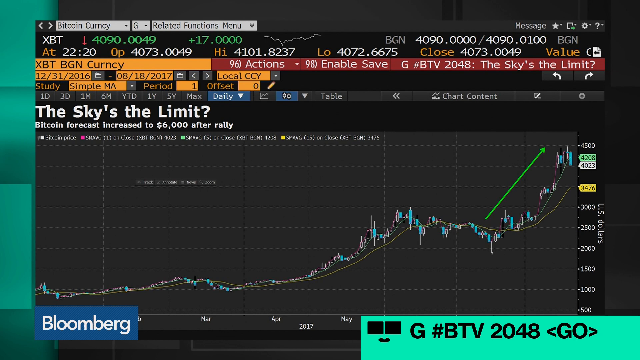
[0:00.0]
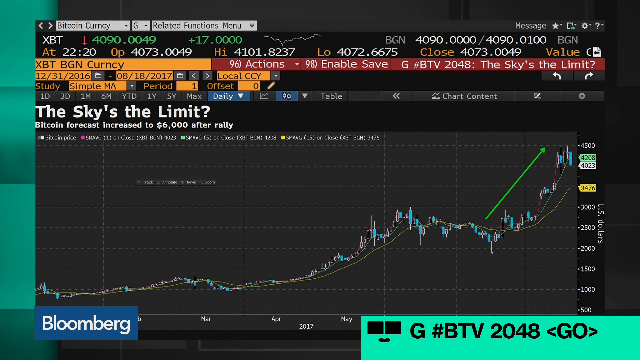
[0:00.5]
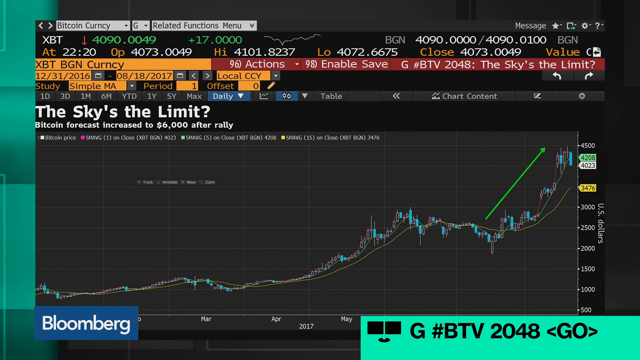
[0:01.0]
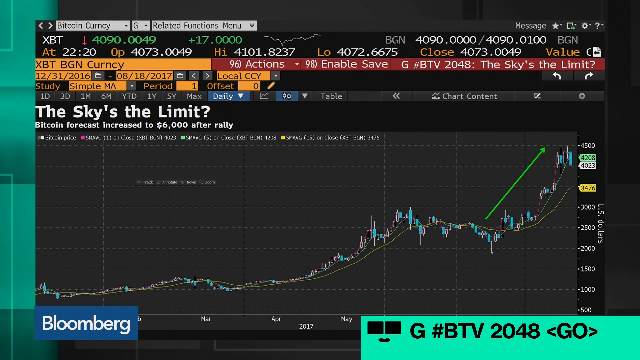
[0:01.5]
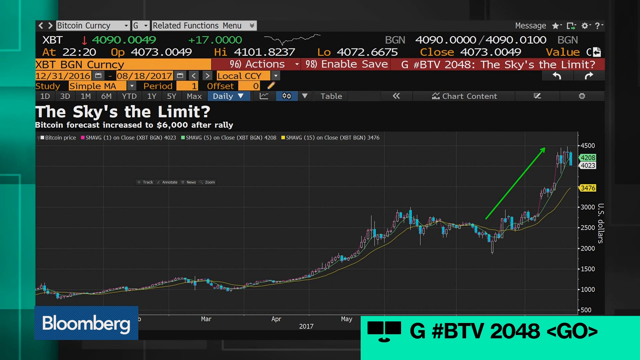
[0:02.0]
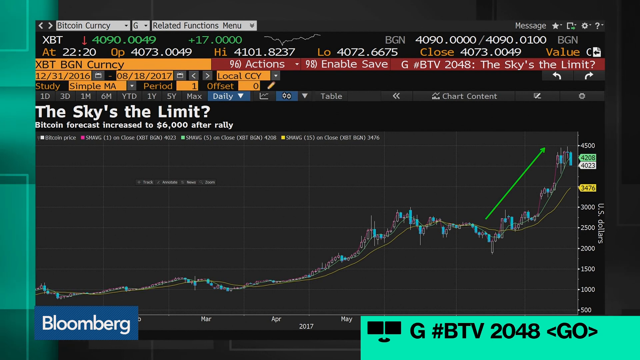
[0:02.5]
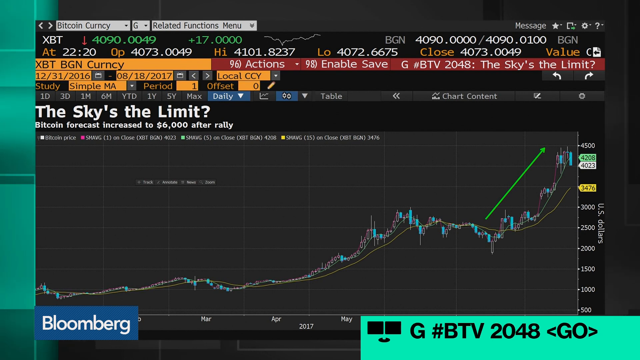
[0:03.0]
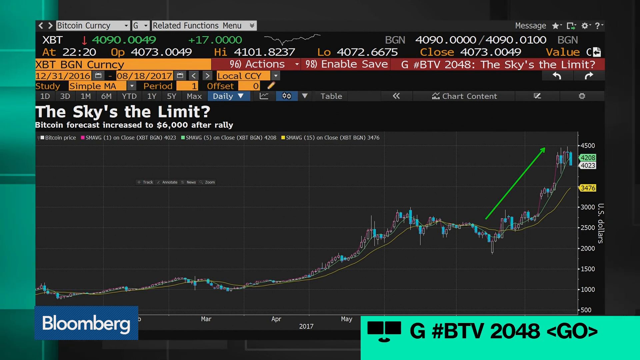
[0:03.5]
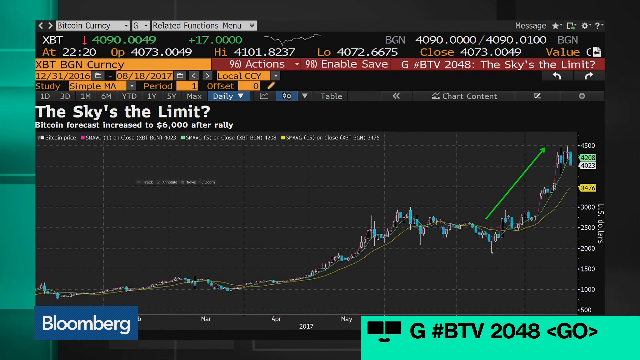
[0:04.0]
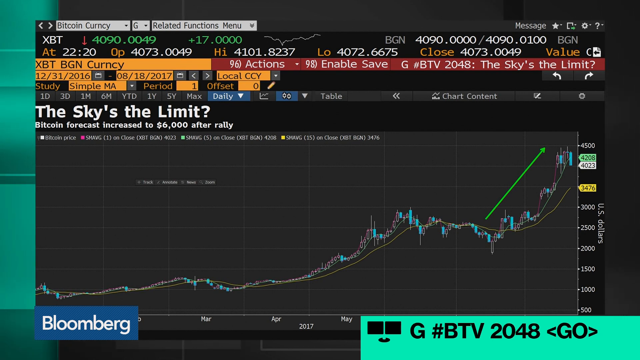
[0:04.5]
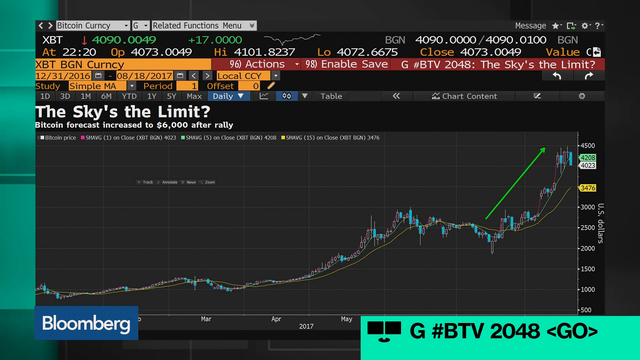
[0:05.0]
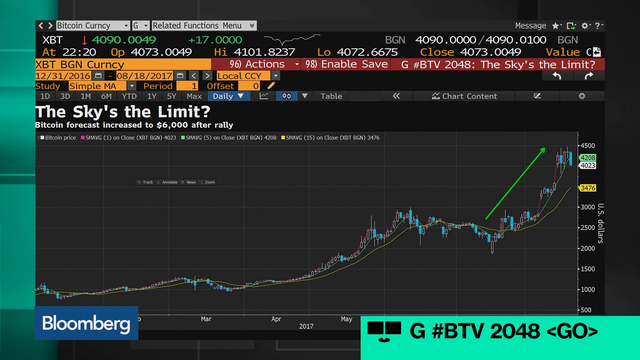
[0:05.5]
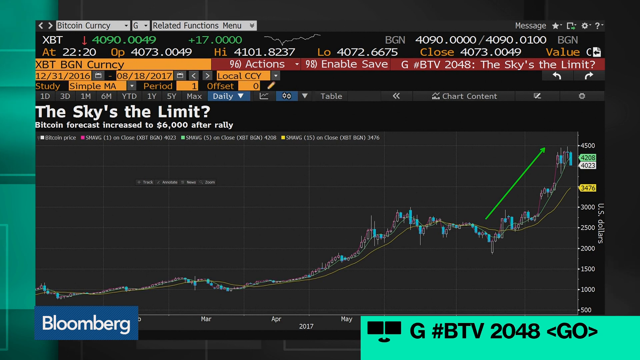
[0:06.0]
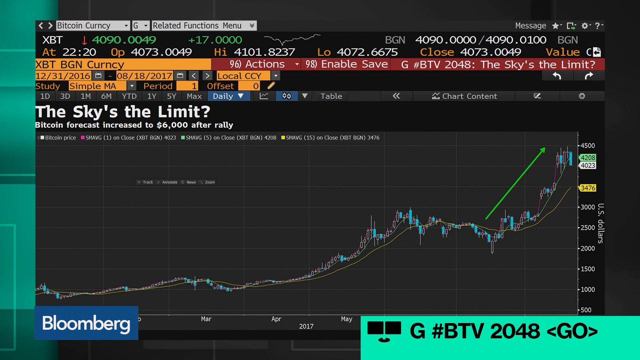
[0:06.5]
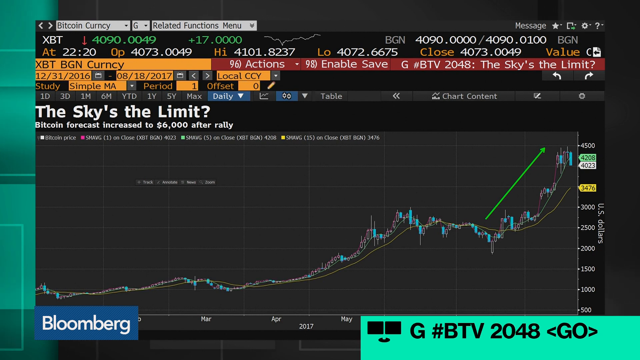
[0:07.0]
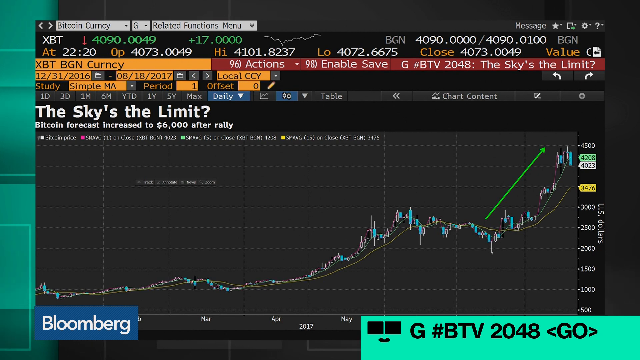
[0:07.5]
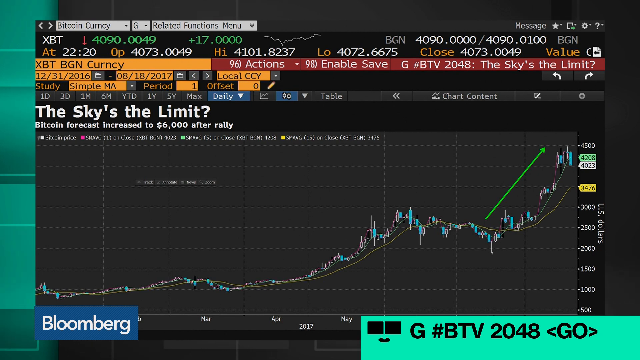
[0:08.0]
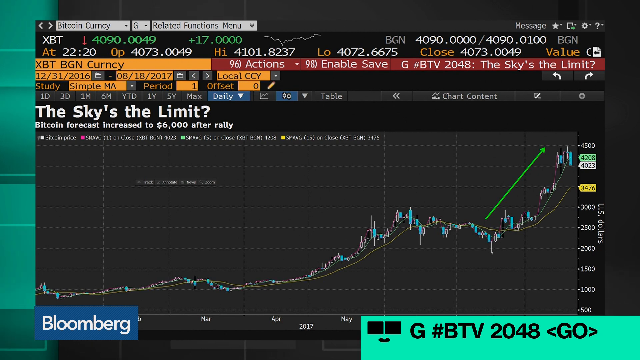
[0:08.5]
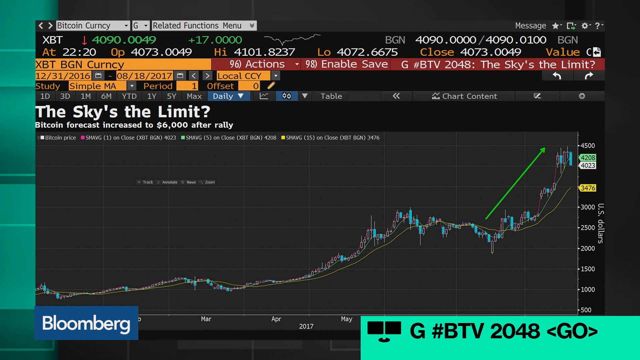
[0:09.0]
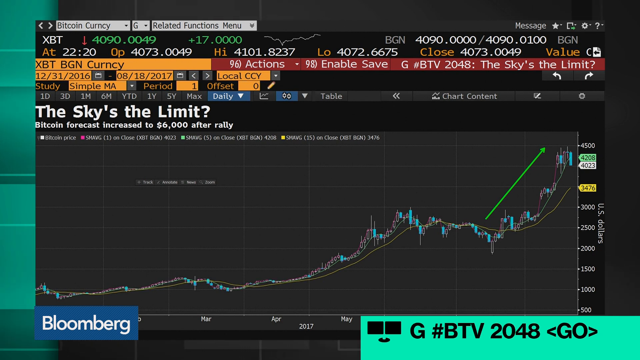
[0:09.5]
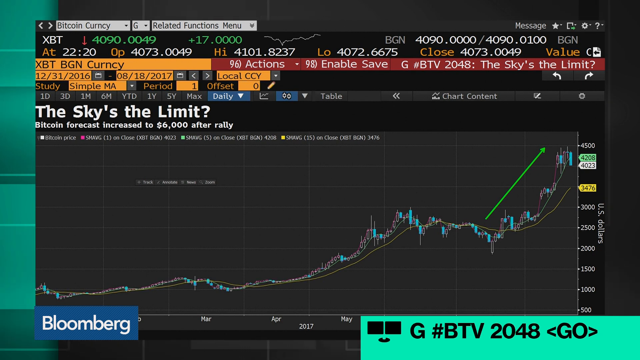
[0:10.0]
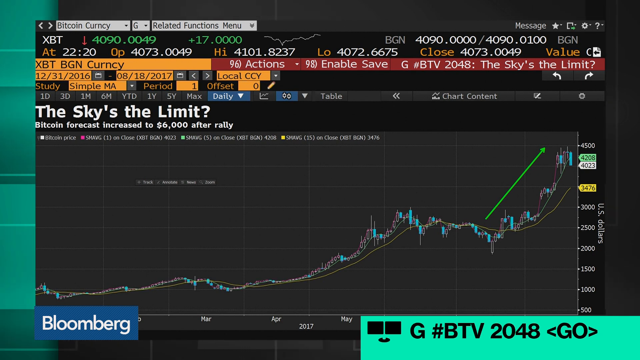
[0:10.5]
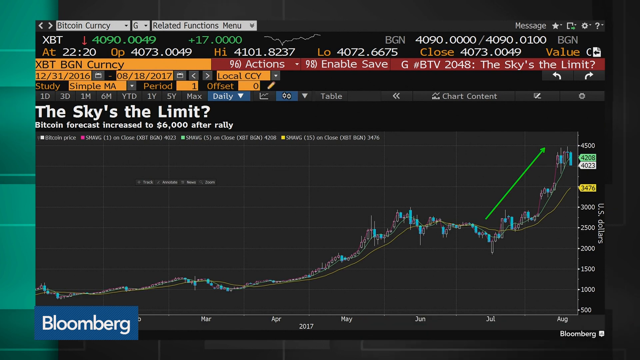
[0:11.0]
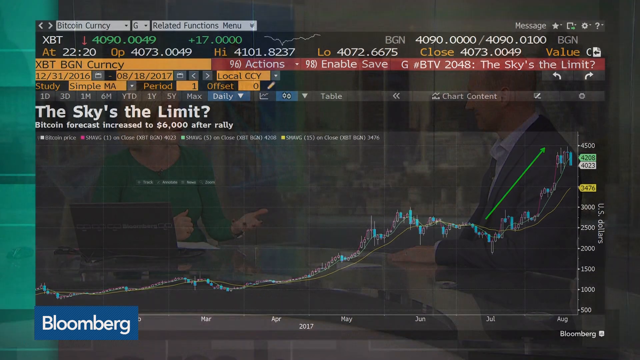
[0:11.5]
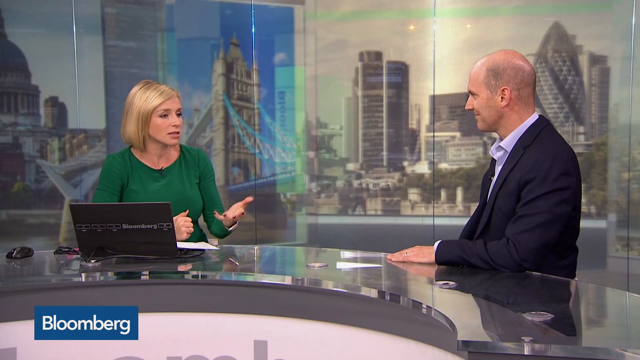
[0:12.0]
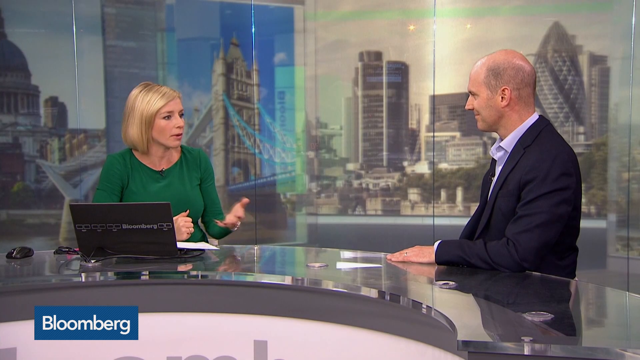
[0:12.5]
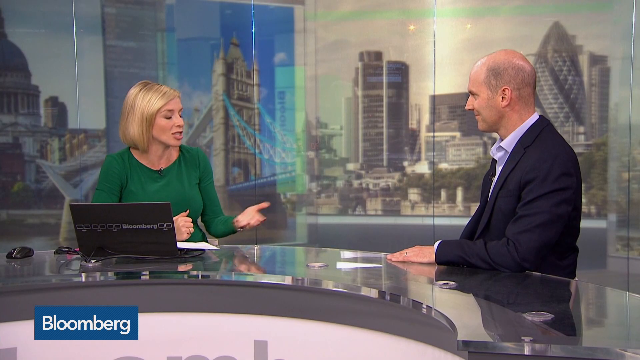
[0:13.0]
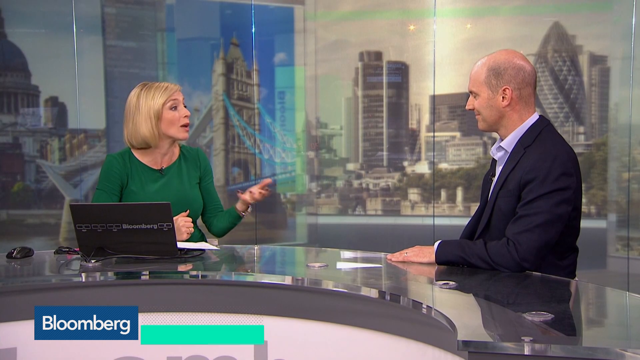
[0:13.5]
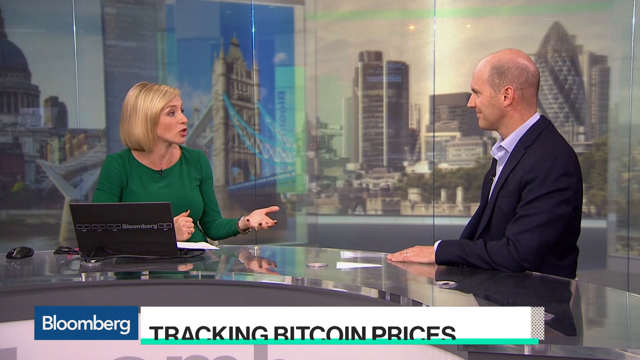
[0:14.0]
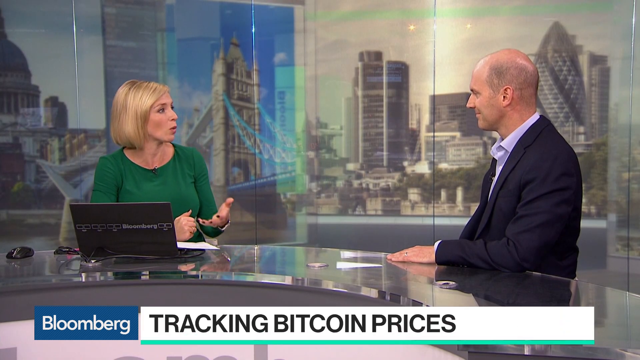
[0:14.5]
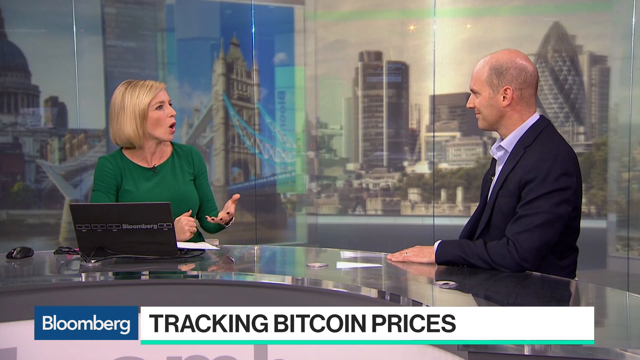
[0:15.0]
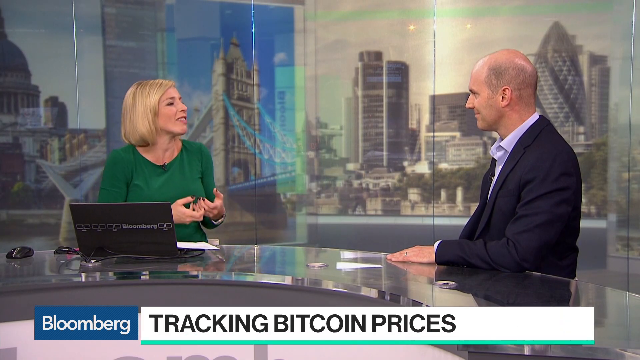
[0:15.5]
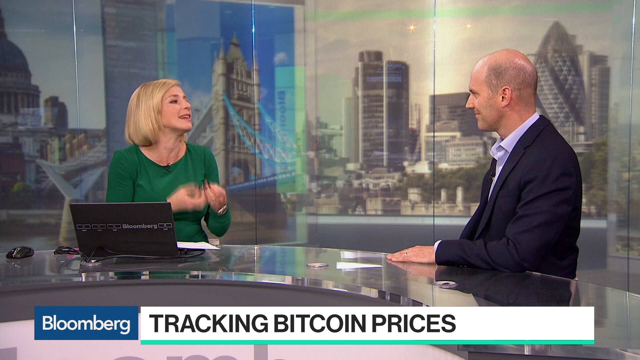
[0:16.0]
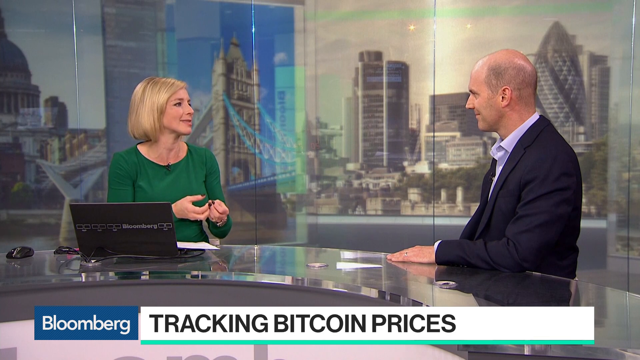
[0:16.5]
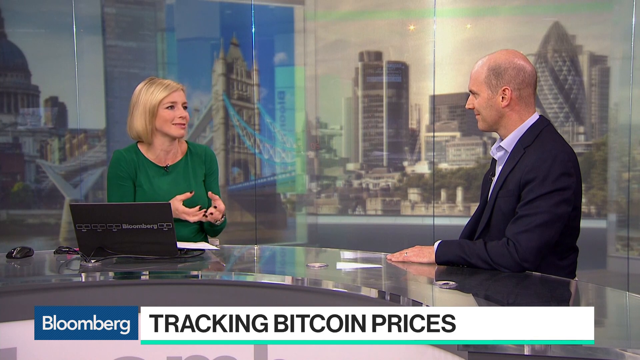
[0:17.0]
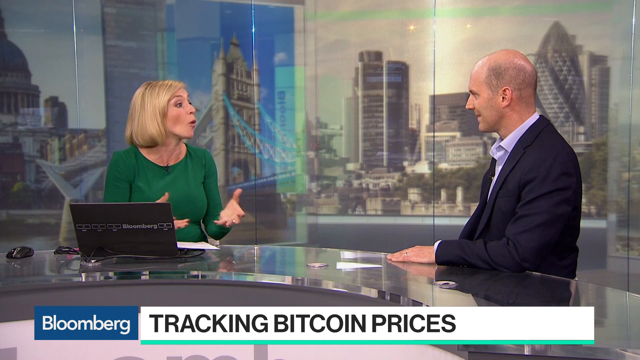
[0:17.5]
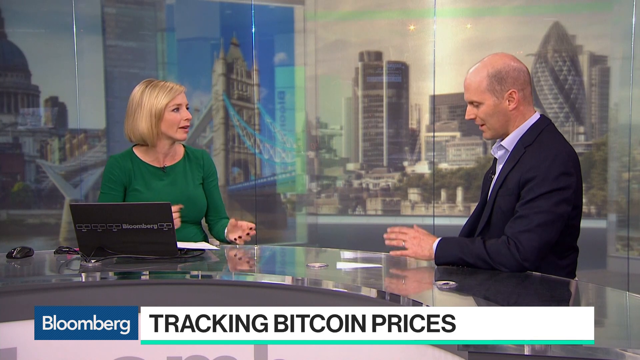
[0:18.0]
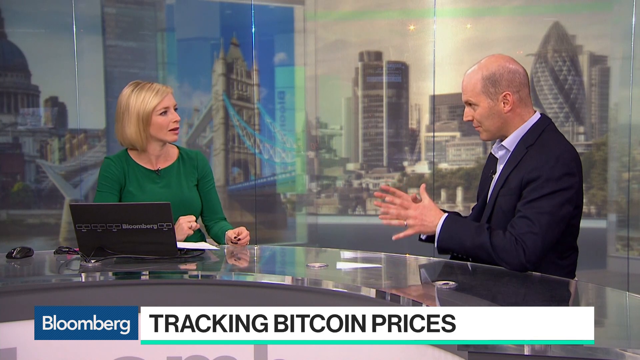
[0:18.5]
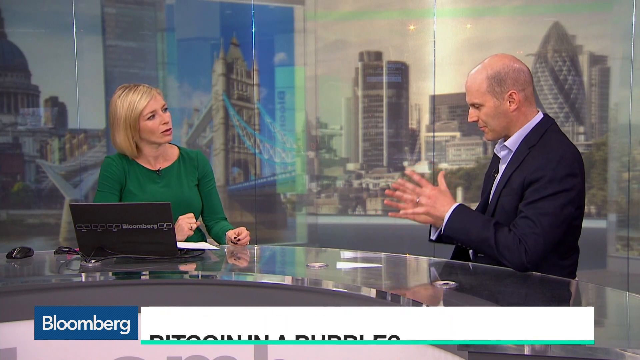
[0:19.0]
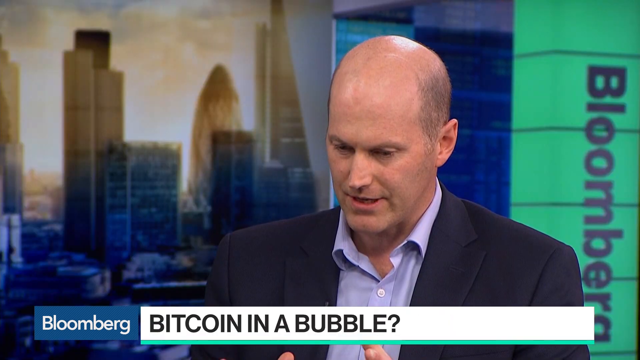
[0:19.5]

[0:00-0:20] The video opens on a screenshot of what seems to be a trading platform, with a large caption reading "The sky's the limit?" and text reading "Bitcoin forecast increased to $6,000 after rally." A pattern on the platform seems to be developing in a bullish manner. The video then switches to what seems to be a TV news interview: a white man is having a conversation with a white woman who seems to be a news presenter. She wears a green top, and he wears a dark jacket with a light blue shirt. A caption reads "tracking Bitcoin." In the background there seems to be the famous bridge of London, suggesting the setting is possibly London. The shot ends on the London buildings in the background, with the man and the woman seemingly having a conversation in front of the camera.